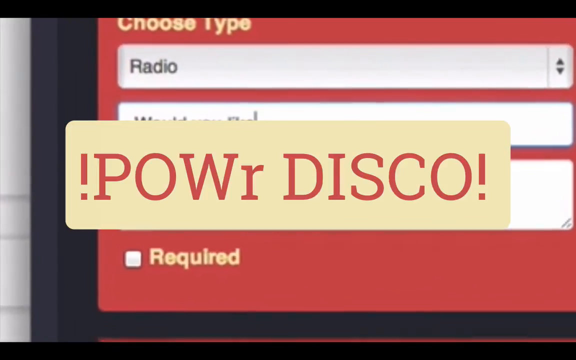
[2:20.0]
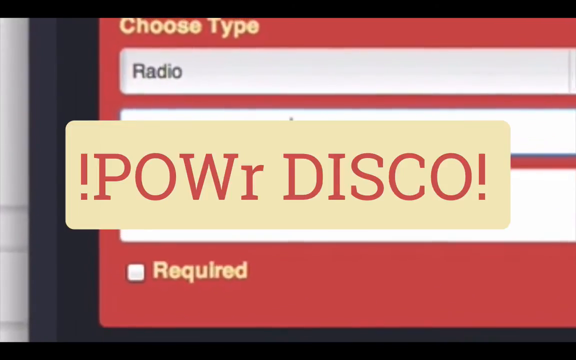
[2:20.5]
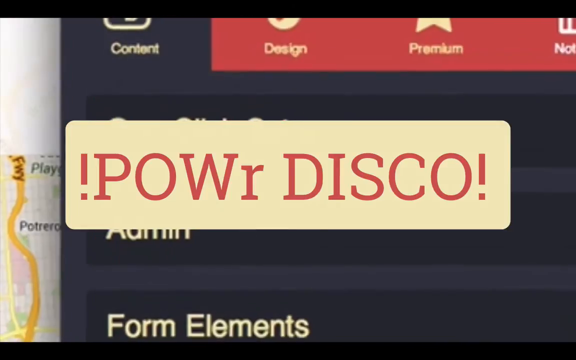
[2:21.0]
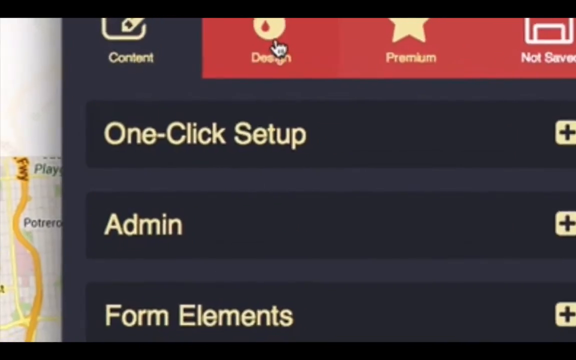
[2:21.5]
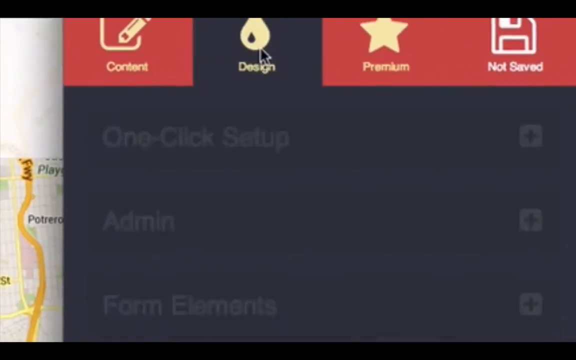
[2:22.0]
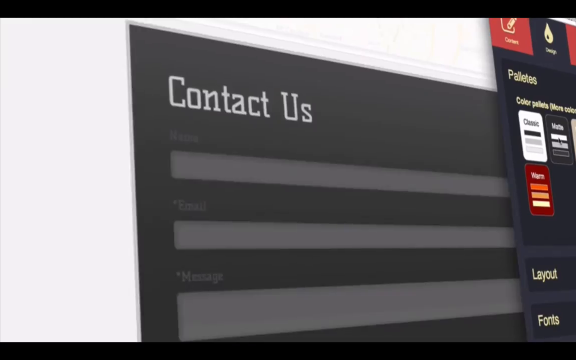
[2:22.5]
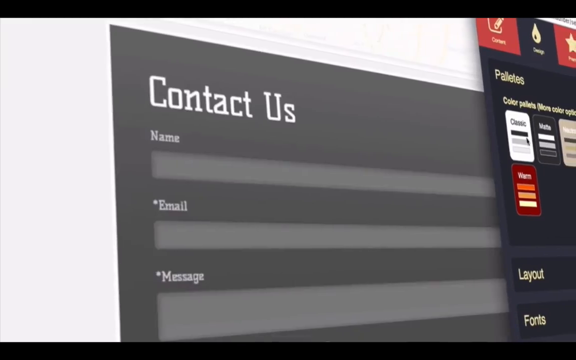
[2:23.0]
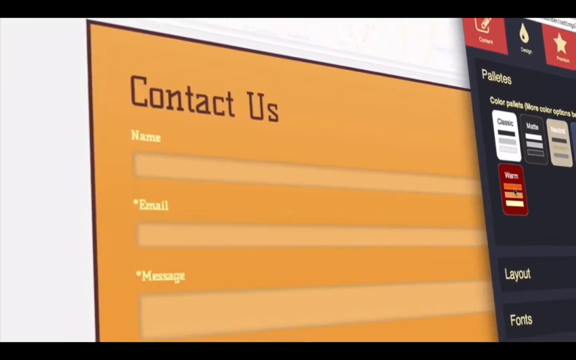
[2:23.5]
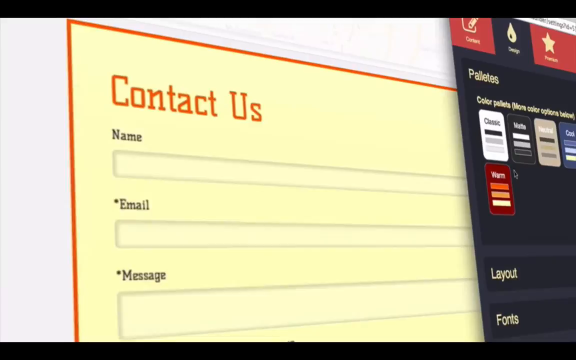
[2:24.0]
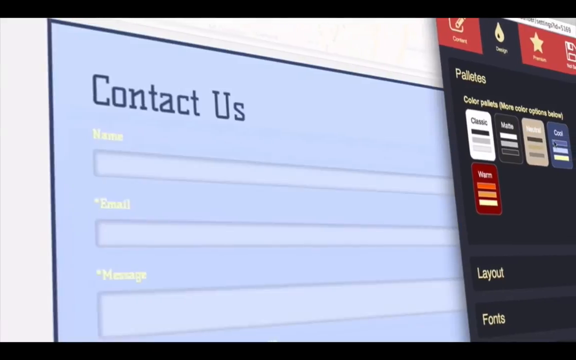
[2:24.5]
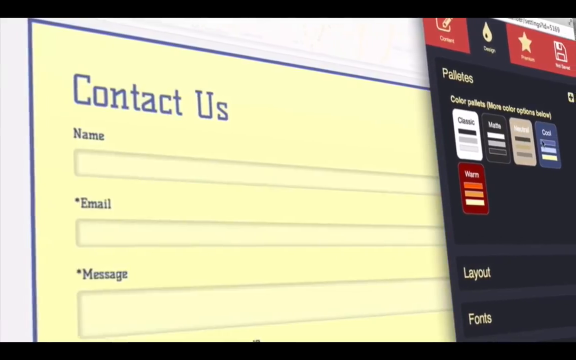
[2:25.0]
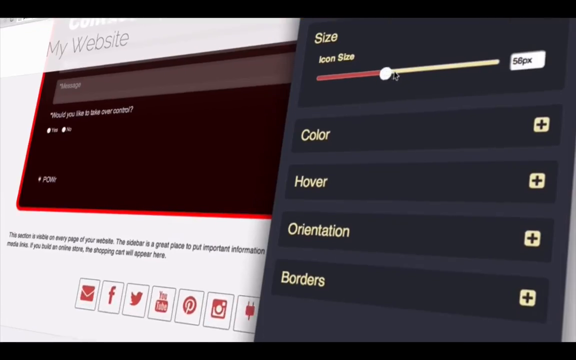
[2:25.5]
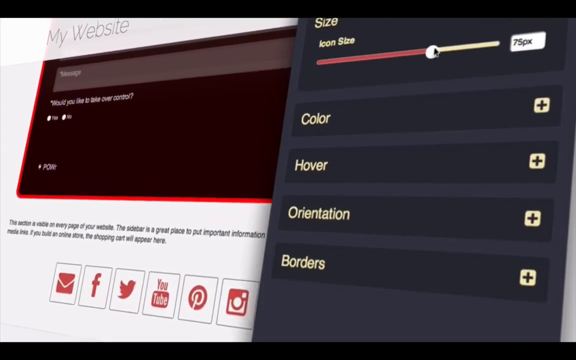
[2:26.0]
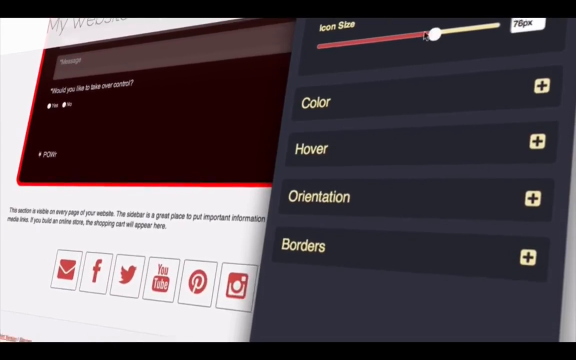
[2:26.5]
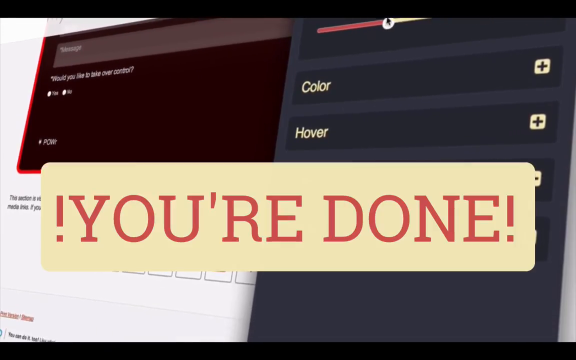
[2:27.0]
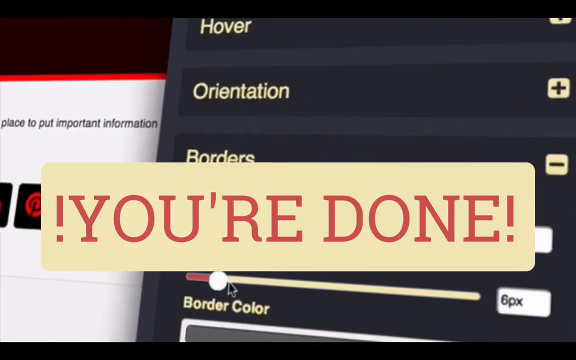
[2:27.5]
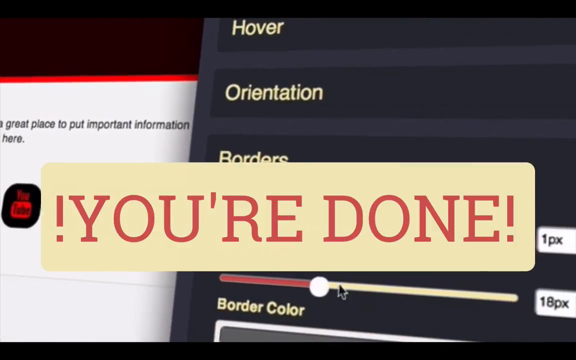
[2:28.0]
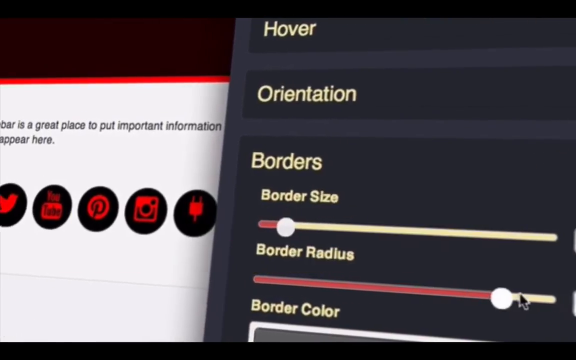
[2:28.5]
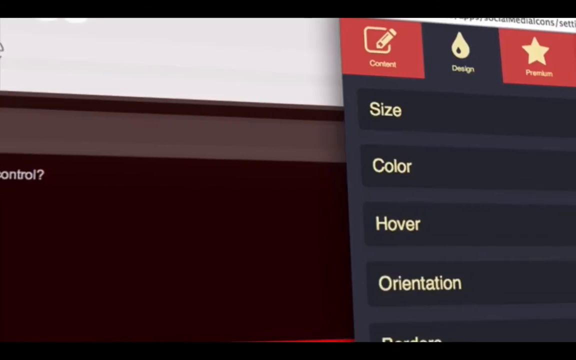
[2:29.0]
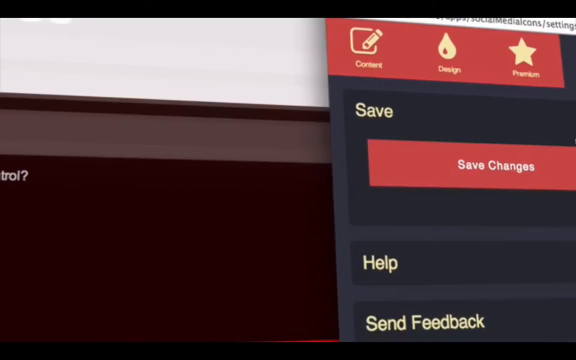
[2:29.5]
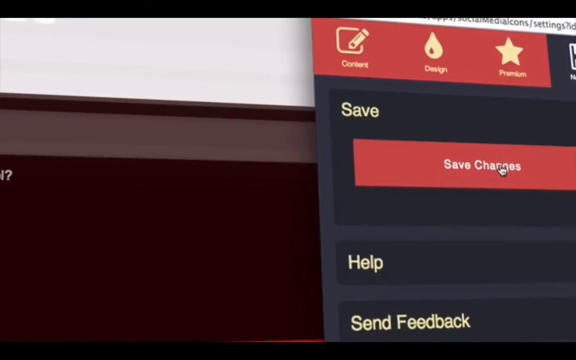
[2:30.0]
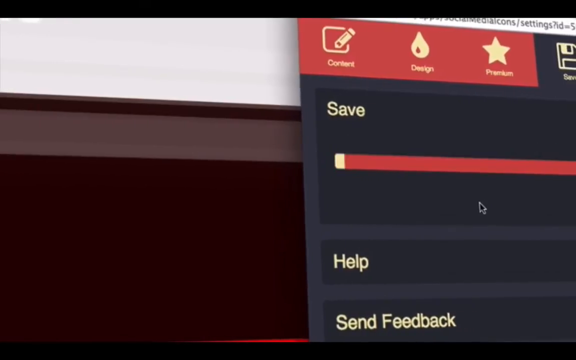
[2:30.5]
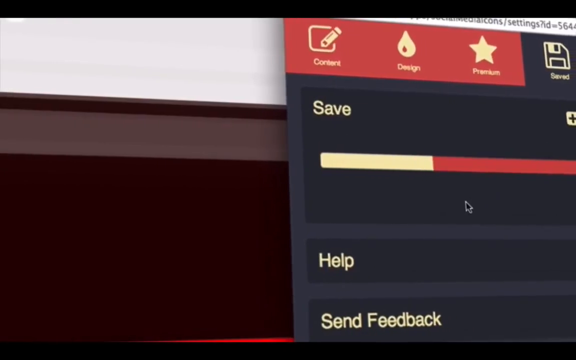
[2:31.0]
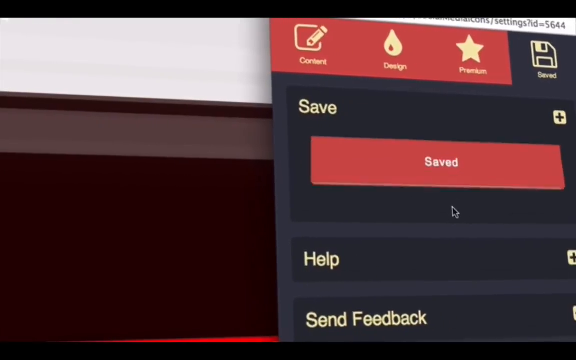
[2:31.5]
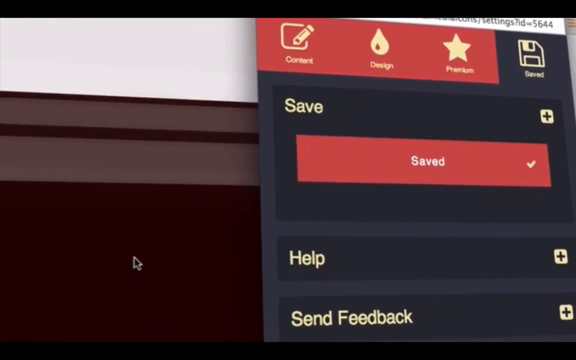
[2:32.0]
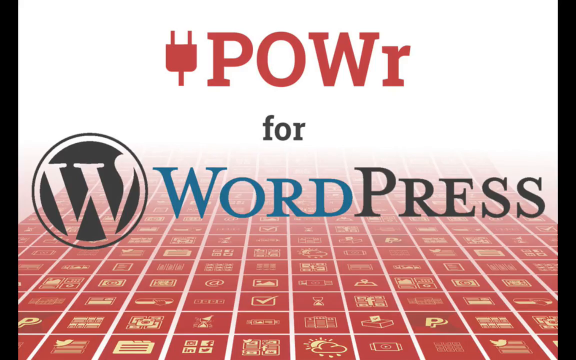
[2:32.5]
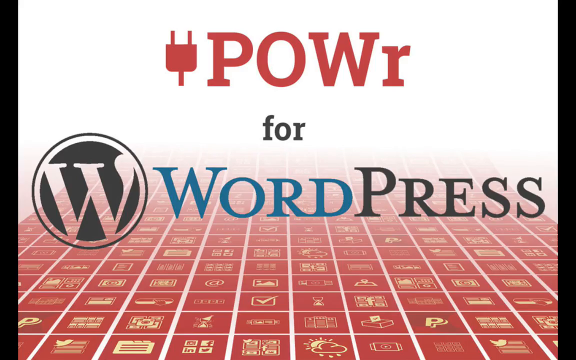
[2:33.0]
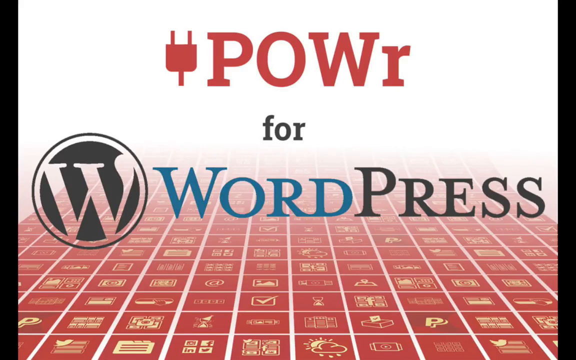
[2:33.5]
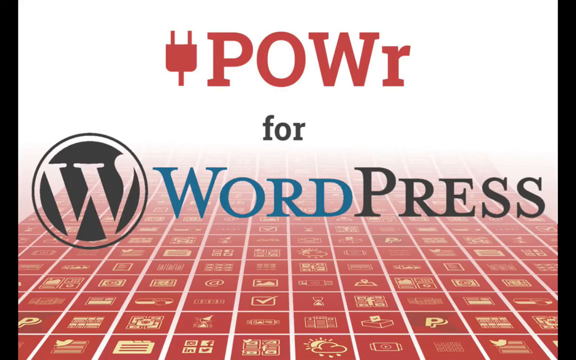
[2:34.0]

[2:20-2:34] The cinematic footage continues, and a yellow rounded rectangle added in post-production reads "!power DISCO!" in red font, with DISCO in capitals. More cinematic footage follows as he clicks the design button and goes to the contact us button. Different themes are available, such as a classic theme, a red theme and a blue theme, and as he clicks each one the contact us square changes color. He also adjusts the size, and the bottom icons change size accordingly. A yellow square with red text added in post-production reads "!you're done!". The POWr editor is still shown, and he clicks a save button, which displays a loading icon that then turns into a red square reading "saved" with a check mark. At the very end, the POWr for WordPress logo from the beginning appears again.